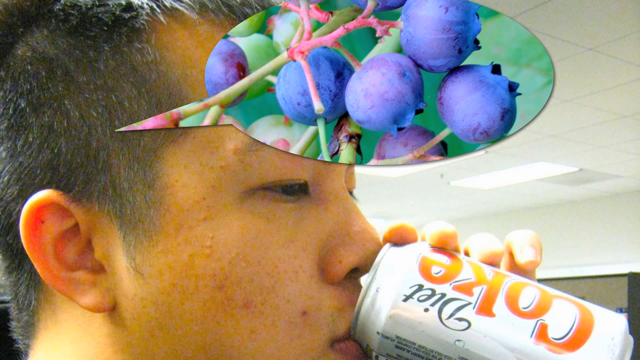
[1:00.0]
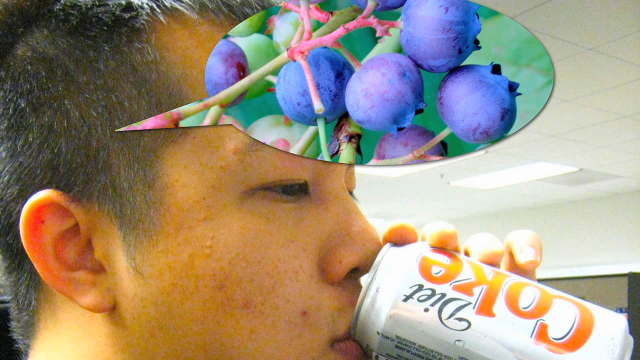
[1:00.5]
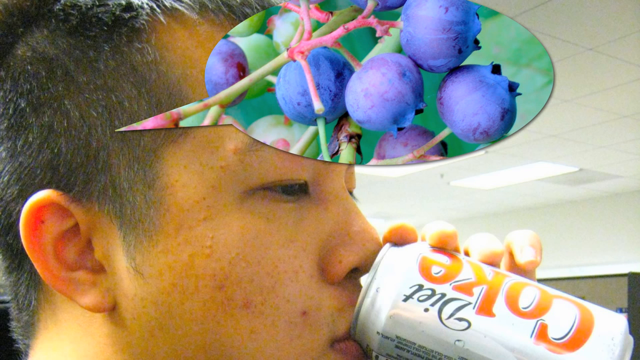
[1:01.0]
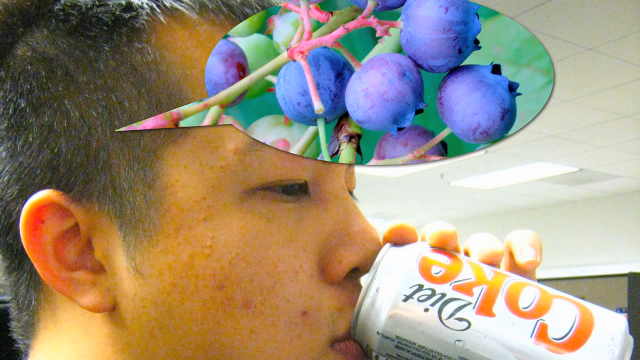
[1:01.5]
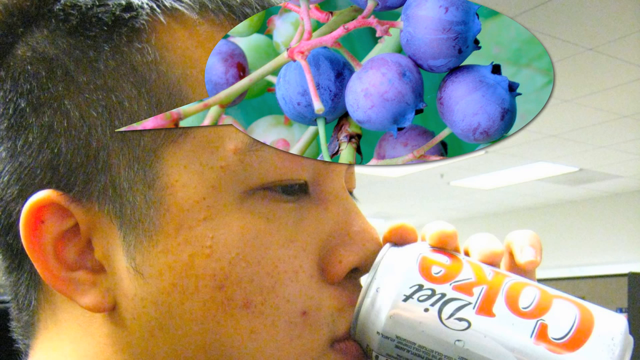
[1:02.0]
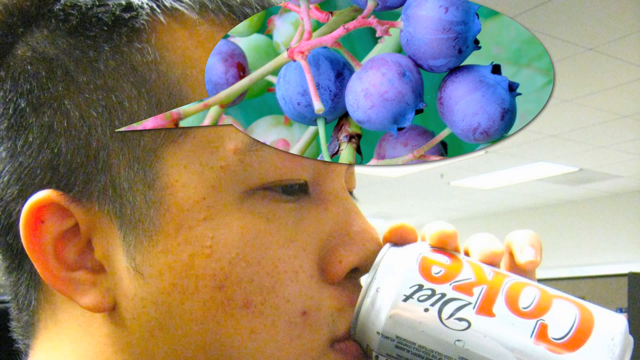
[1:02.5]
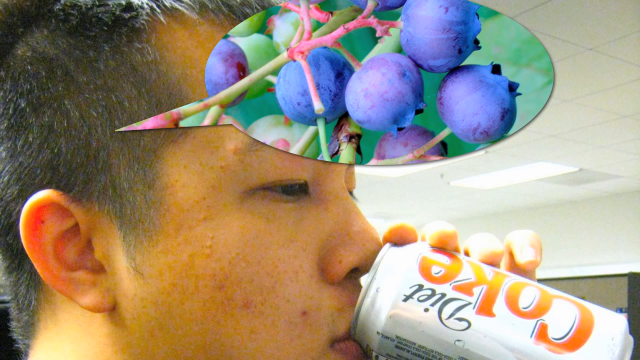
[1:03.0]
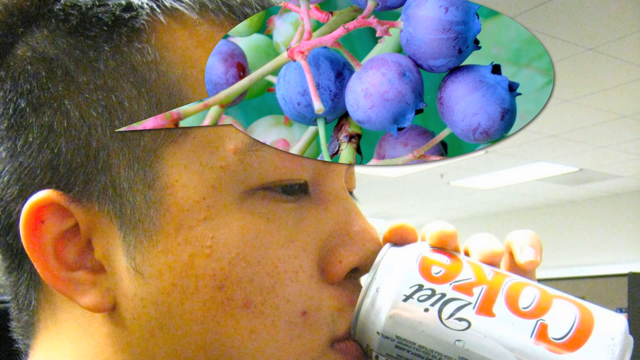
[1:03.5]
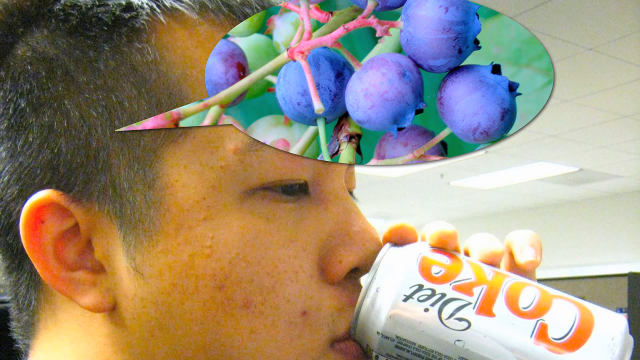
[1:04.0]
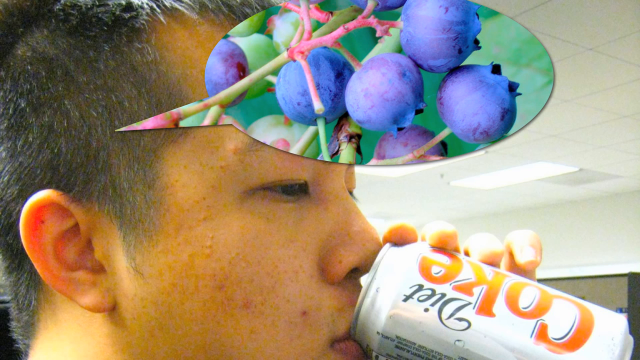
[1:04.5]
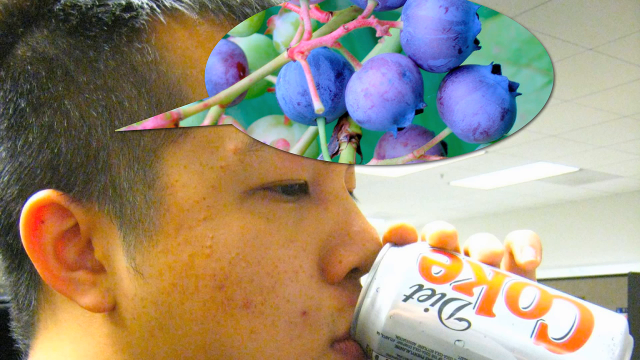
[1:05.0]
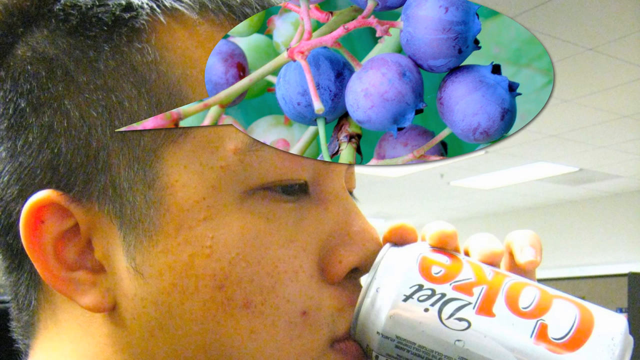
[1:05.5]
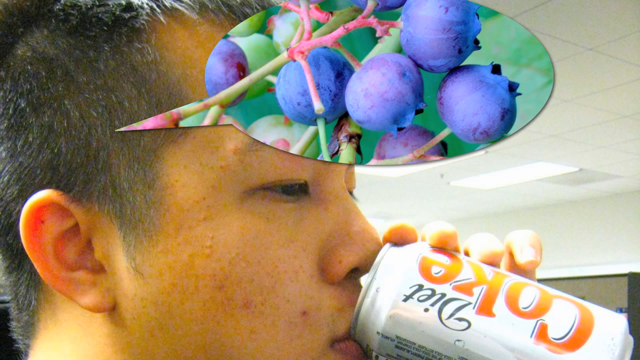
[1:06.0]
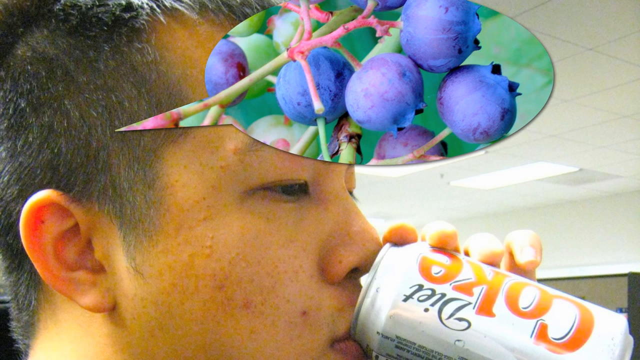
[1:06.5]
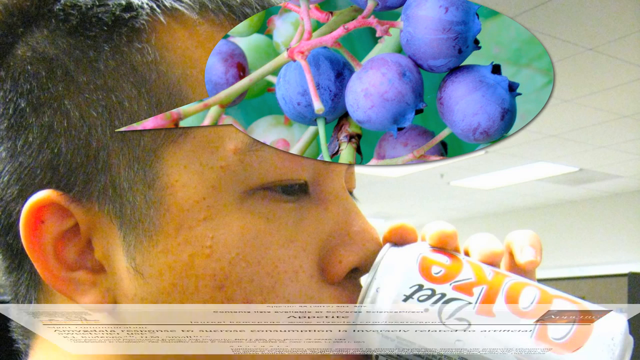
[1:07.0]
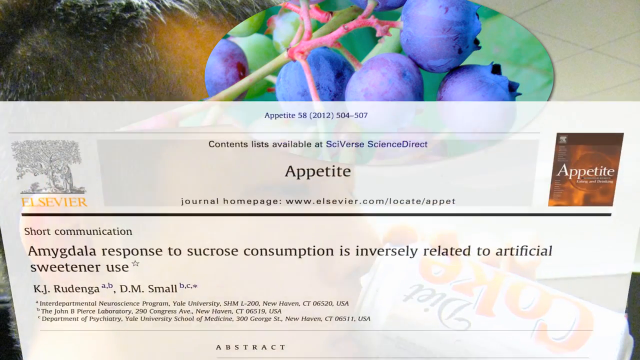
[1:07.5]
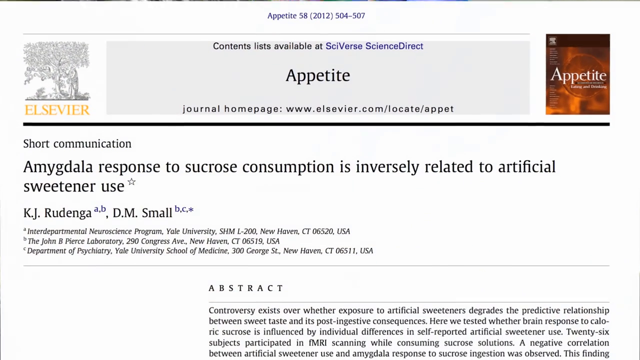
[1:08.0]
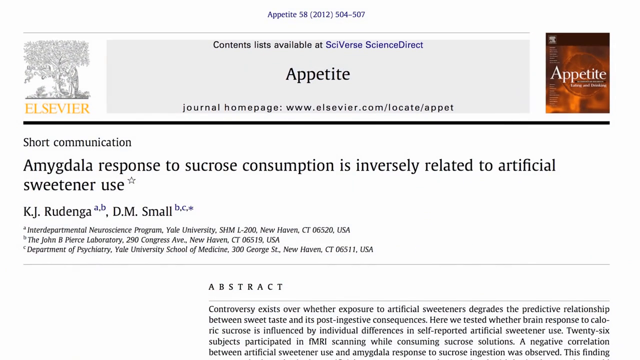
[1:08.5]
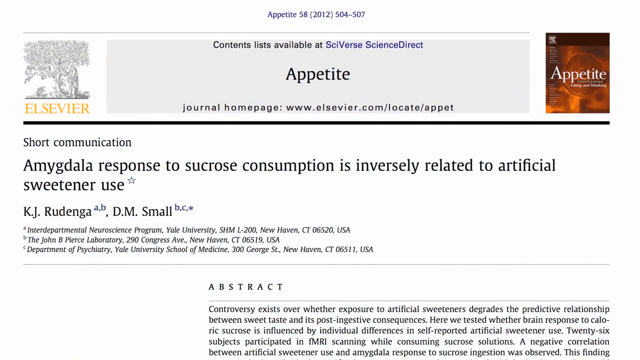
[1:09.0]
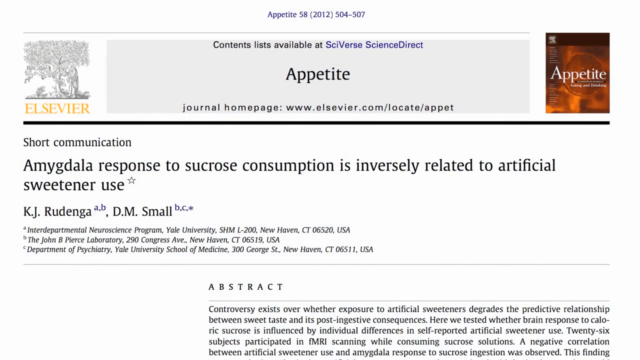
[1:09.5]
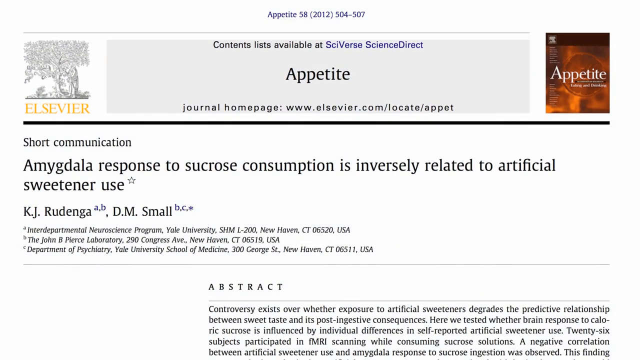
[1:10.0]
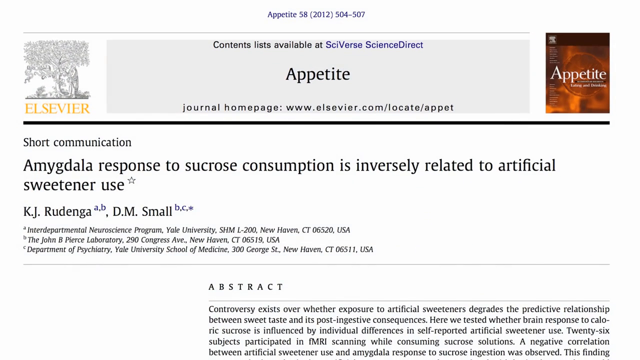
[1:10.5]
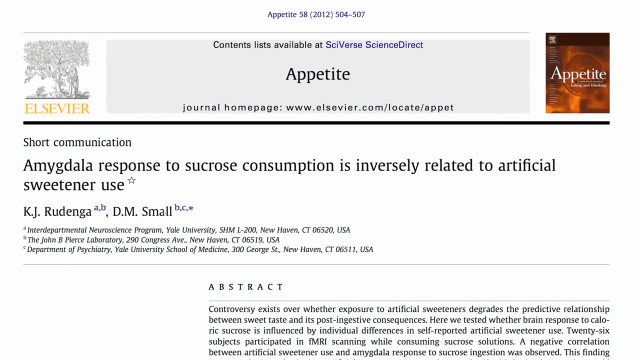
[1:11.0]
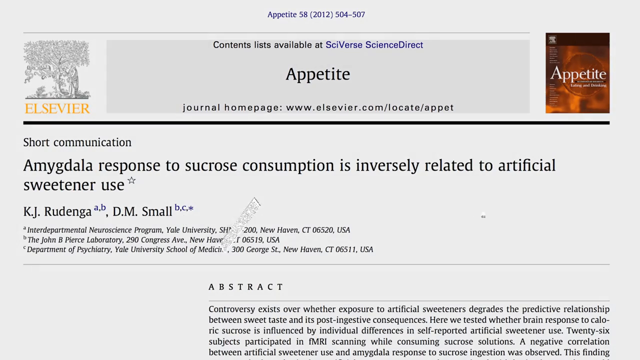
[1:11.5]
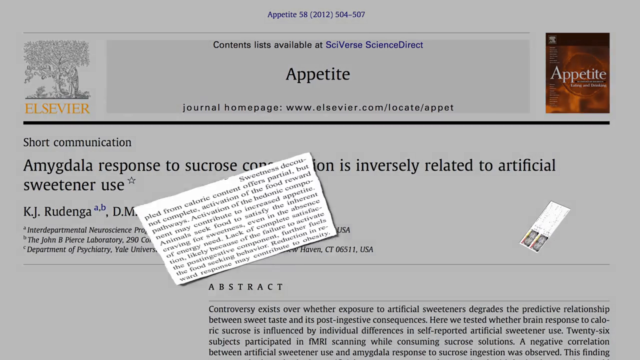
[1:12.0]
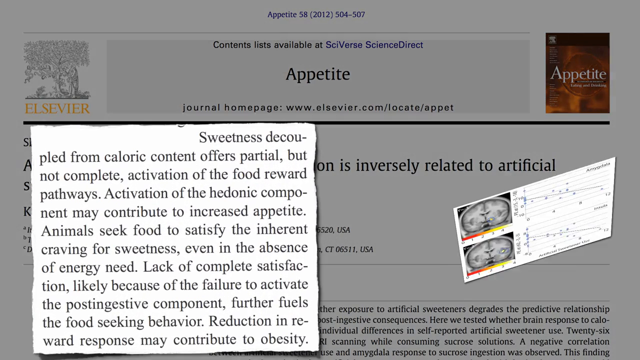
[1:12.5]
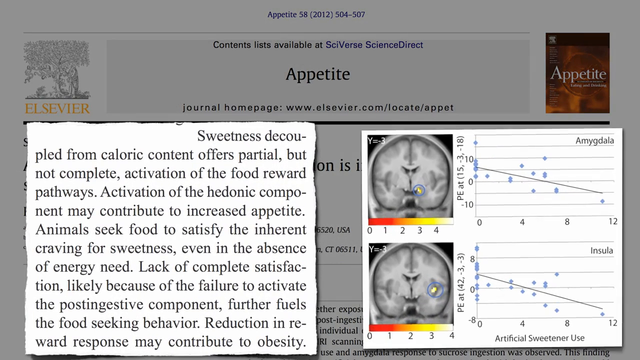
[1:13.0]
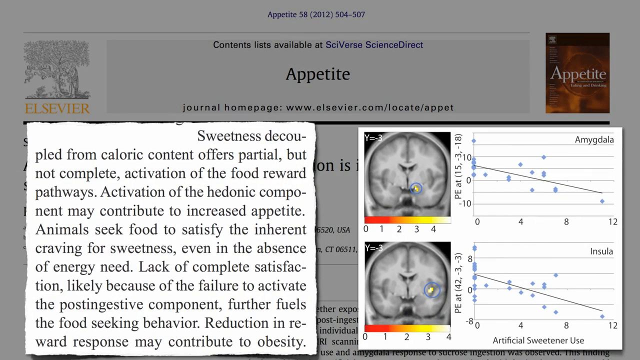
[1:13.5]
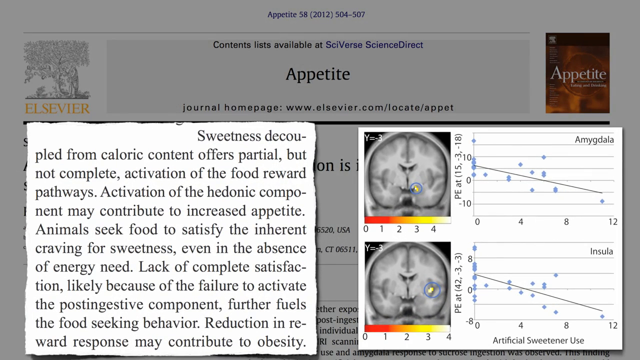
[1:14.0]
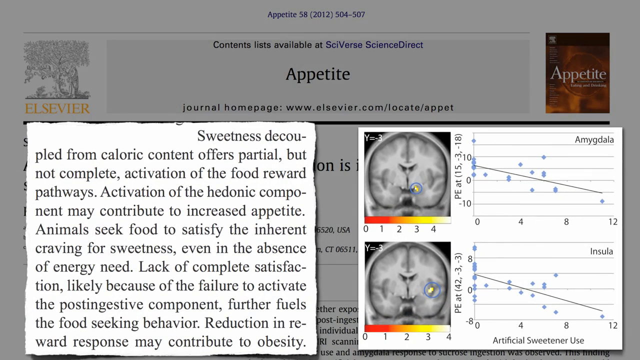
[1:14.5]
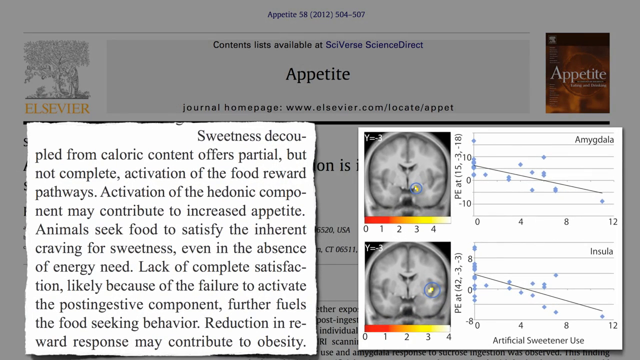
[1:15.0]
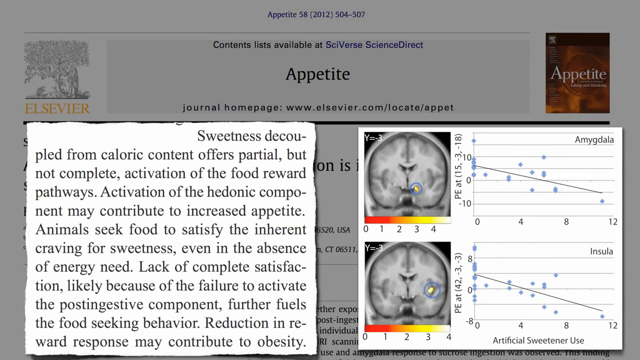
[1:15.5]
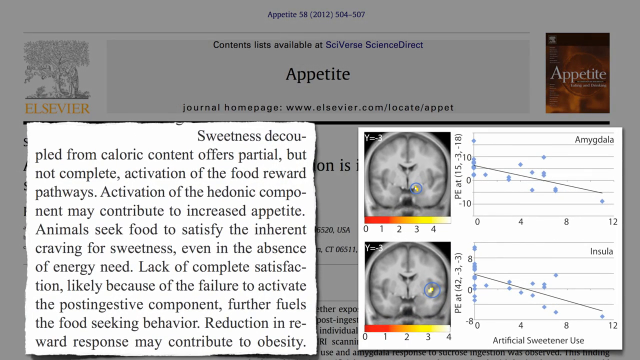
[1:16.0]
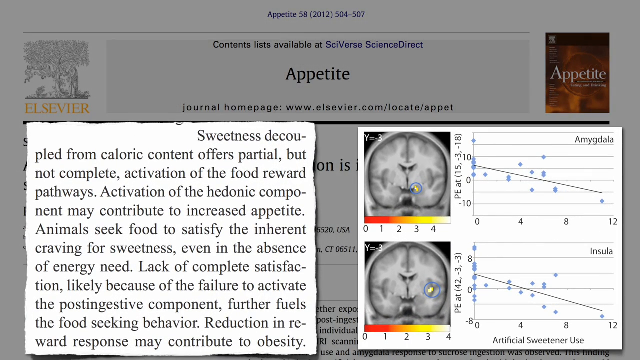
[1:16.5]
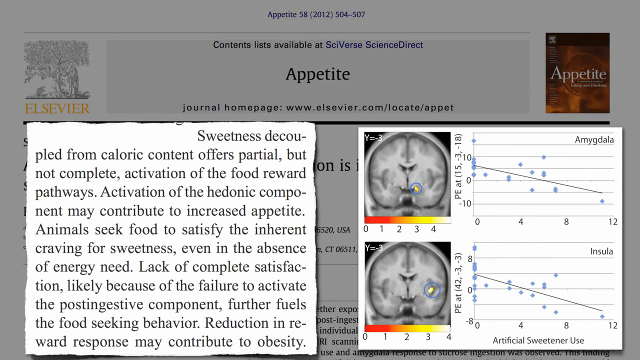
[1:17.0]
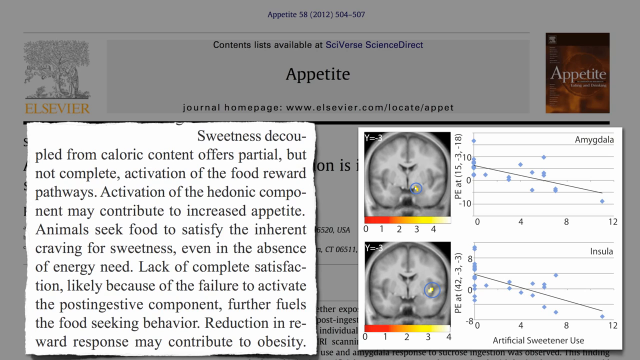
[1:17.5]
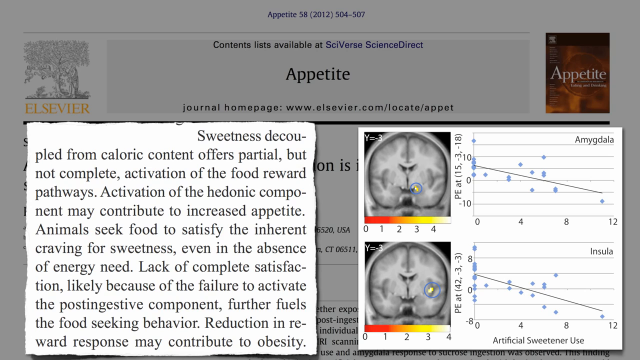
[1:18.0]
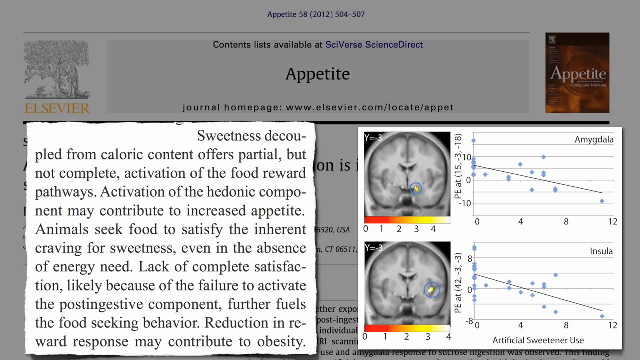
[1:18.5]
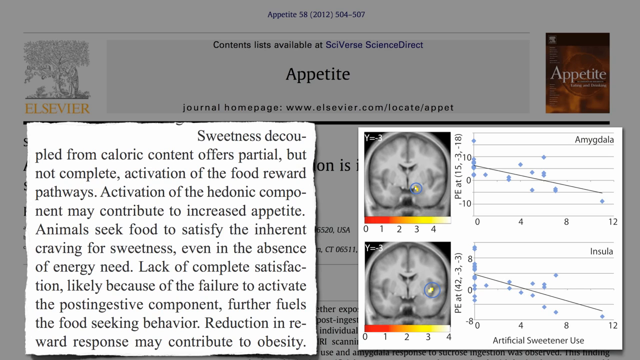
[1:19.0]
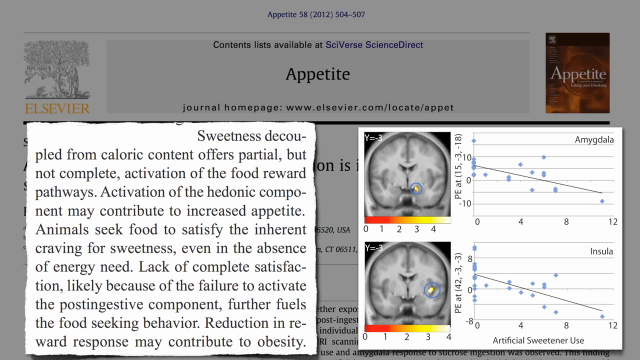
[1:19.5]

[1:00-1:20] A young Asian man with short cropped hair is on the left of the screen, seen from the left side of his face. He is drinking a Diet Coke, the can pressed to his lips and held in his left hand. A thought bubble is superimposed over the video, containing fresh blueberries growing on the vine, with six blueberries showing, suggesting he is thinking of fresh blueberries as he drinks. The screen then changes to an article titled "Appetite," which starts with "short communication" and a title ending "response to sucrose consumption is inversely related to artificial sweetener use." This is an abstract from the original article.